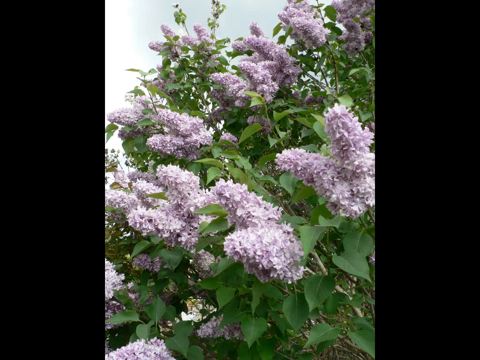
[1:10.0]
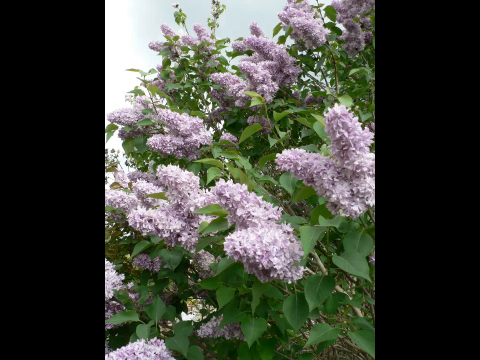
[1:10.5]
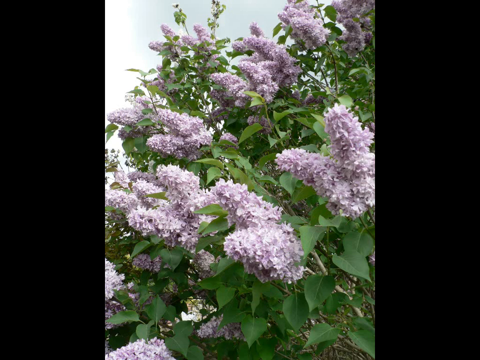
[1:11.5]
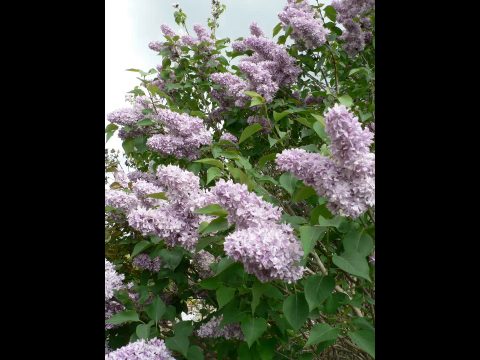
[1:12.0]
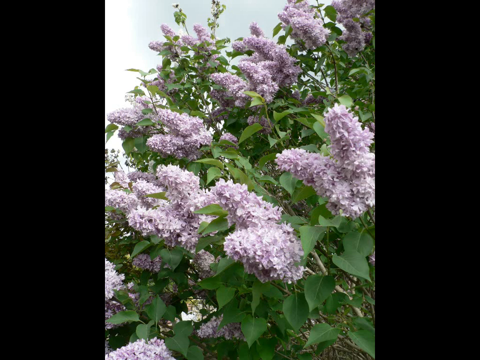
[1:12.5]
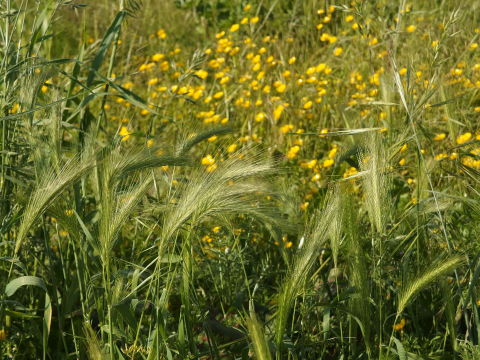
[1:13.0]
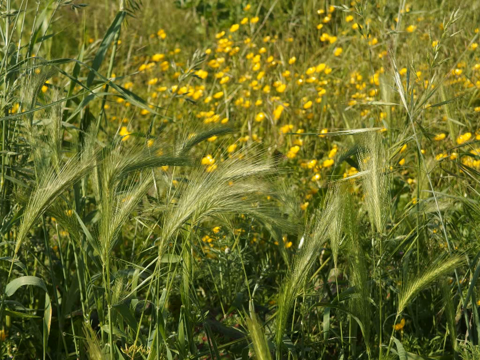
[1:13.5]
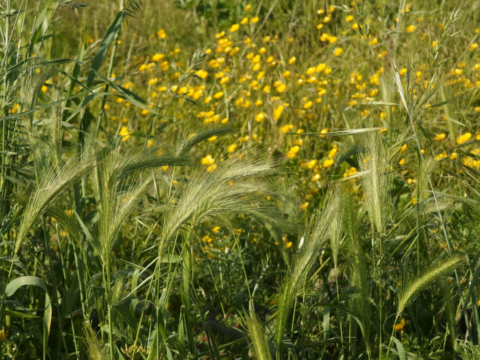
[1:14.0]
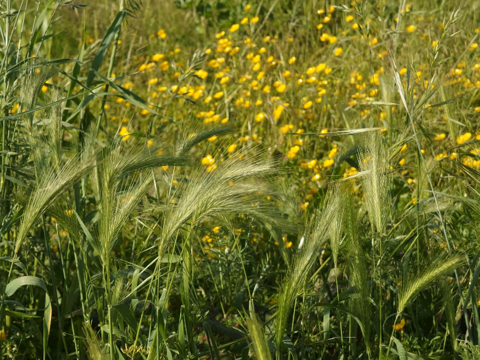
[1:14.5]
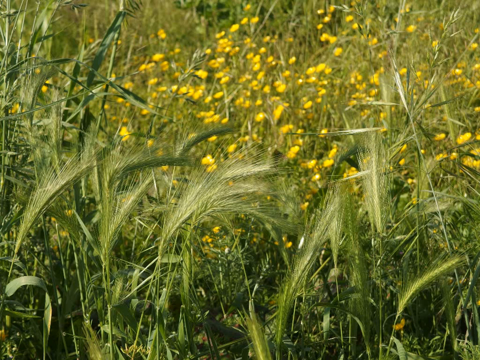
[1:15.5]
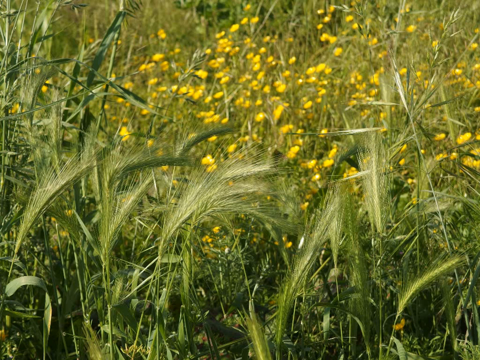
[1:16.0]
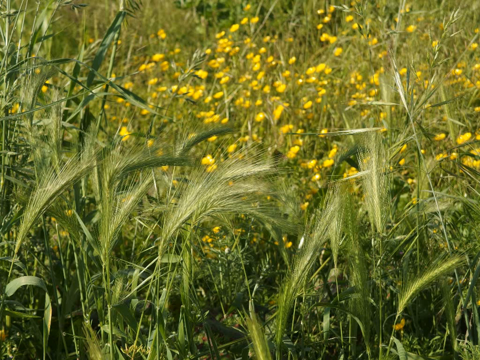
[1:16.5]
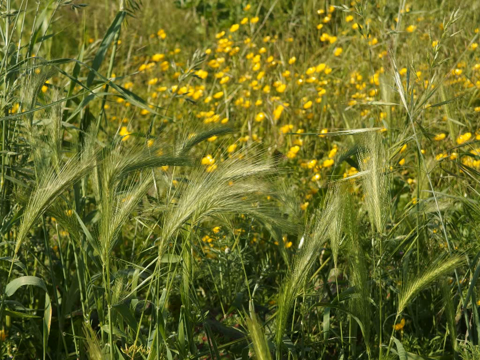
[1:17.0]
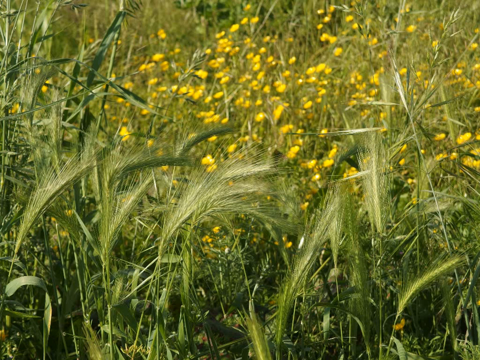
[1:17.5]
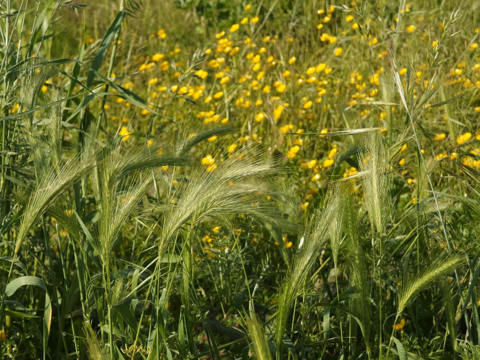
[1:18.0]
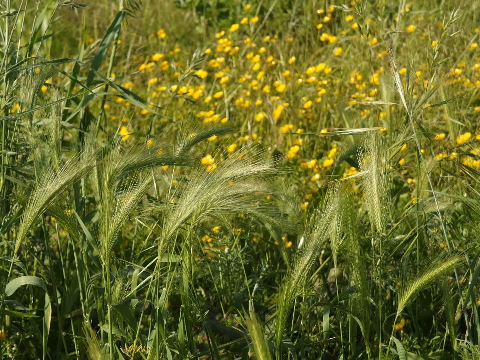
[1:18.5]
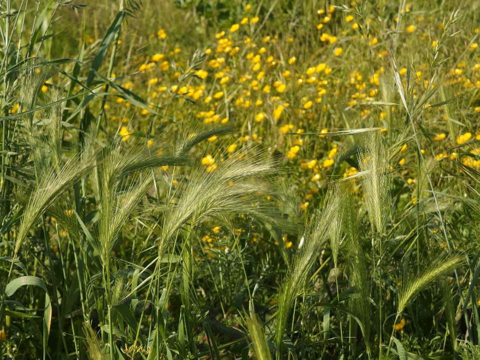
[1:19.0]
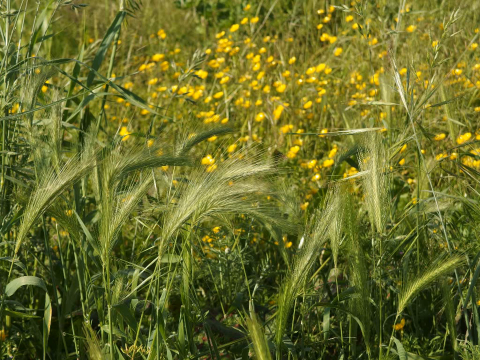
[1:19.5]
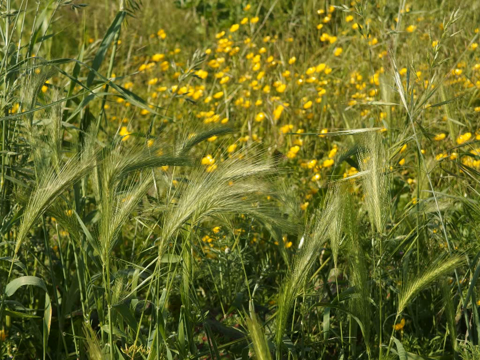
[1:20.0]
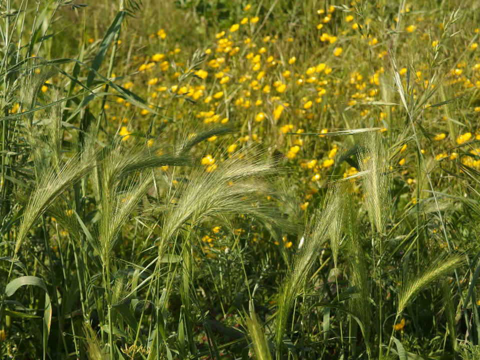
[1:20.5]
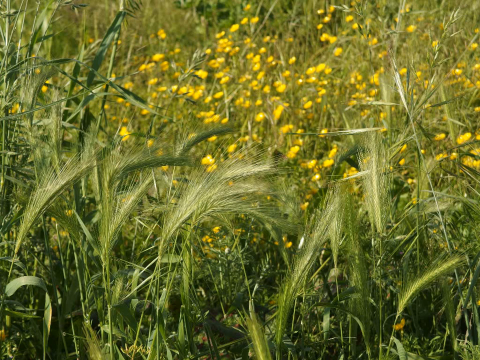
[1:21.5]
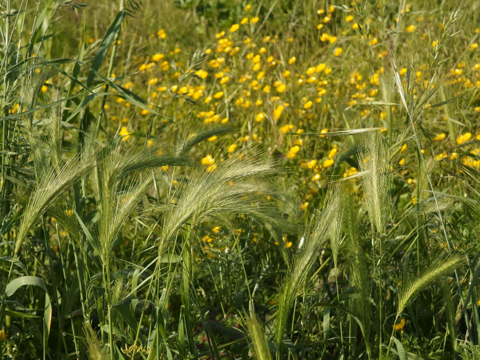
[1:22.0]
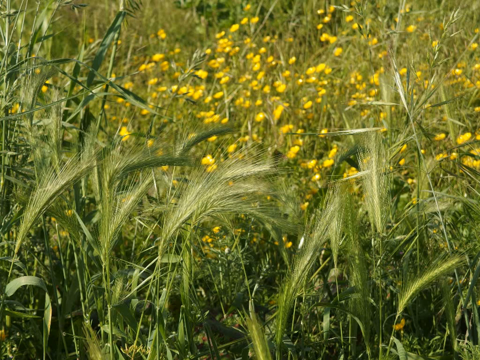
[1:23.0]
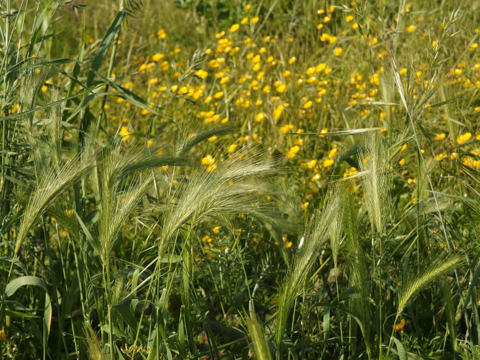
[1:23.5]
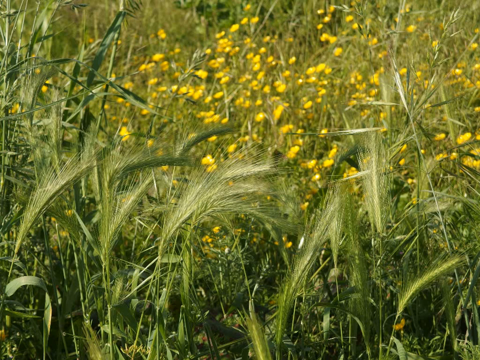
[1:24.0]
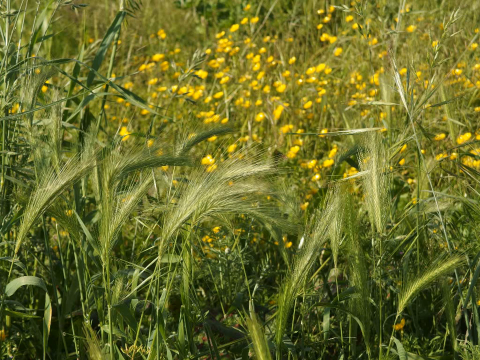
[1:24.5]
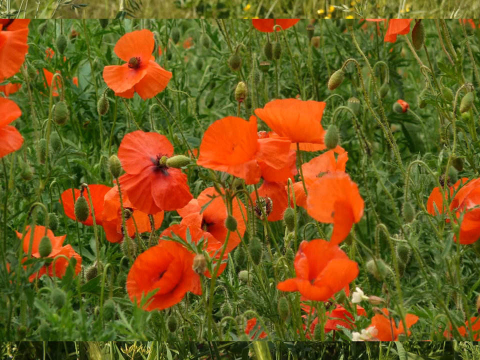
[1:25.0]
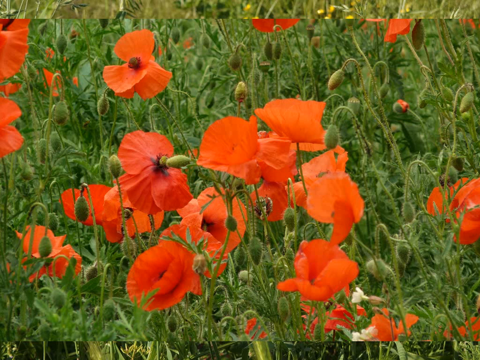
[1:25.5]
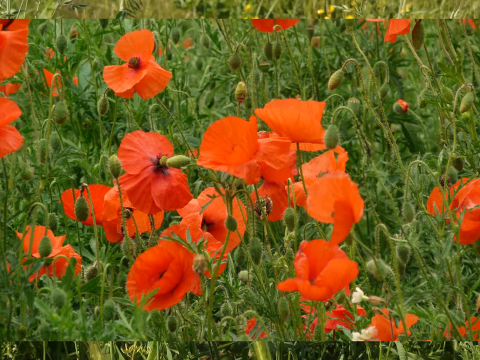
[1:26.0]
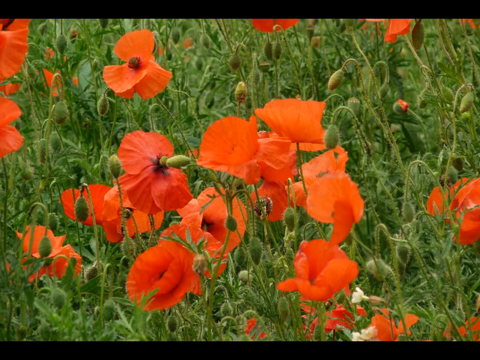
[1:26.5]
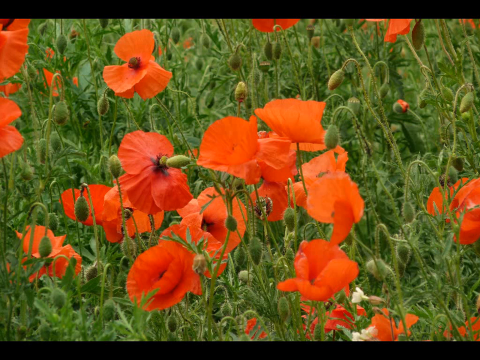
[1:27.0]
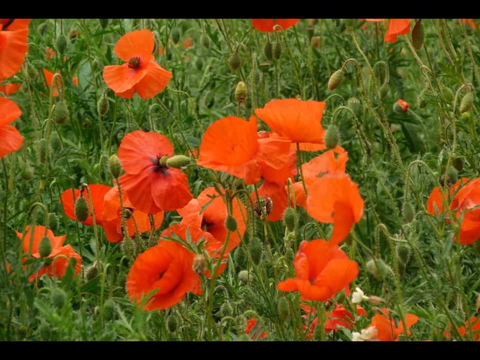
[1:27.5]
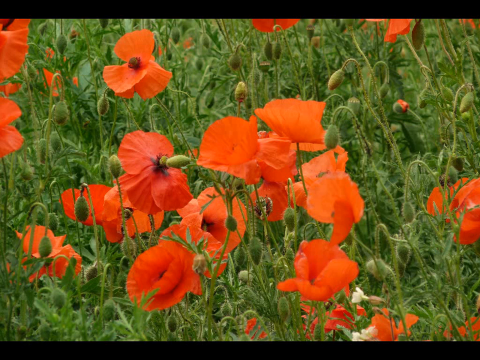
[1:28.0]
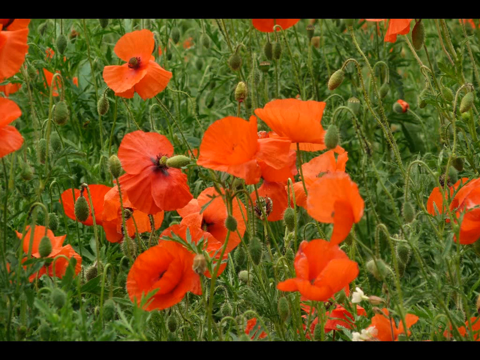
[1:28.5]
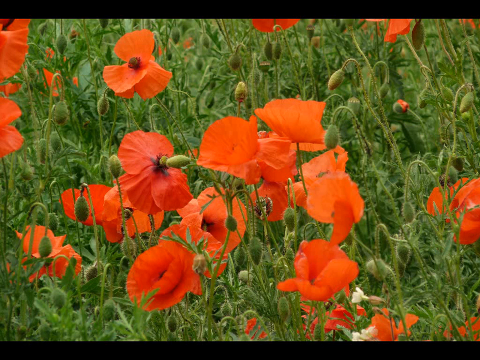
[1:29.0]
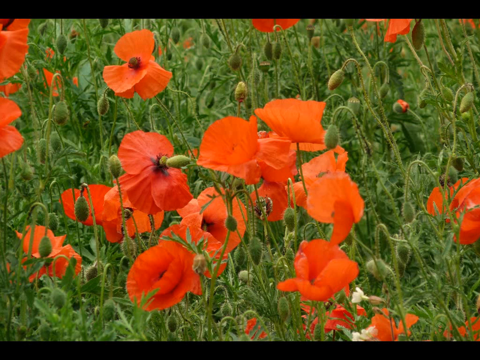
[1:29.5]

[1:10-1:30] The long, soft-looking light purple flowers spread throughout green leaves are shown first. The scene then shifts to a whole bunch of green grass that almost looks like a cornfield, though it is hard to tell because the view is fairly up close. Tall grass is in the foreground, and some small flowers, seemingly yellow, are in the background. Next comes a scene of large, bright orange flowers spread throughout very large, thick green grass, along with some flowers that have not yet bloomed.